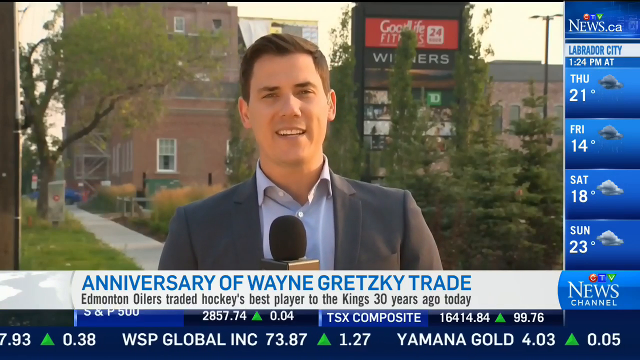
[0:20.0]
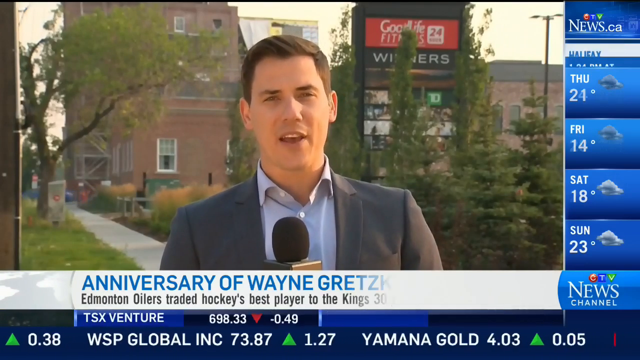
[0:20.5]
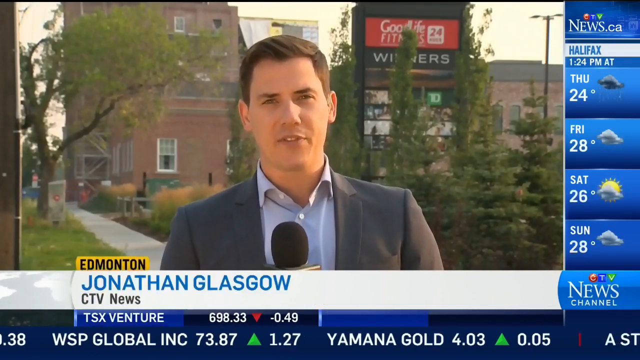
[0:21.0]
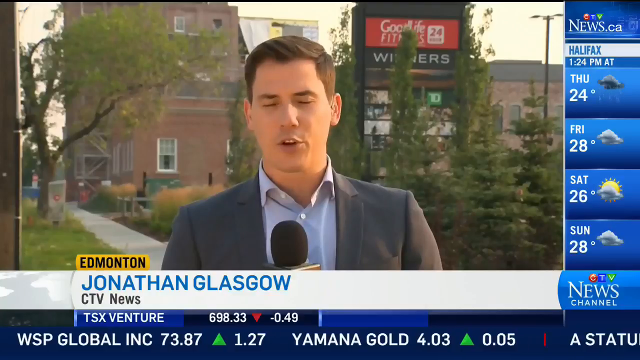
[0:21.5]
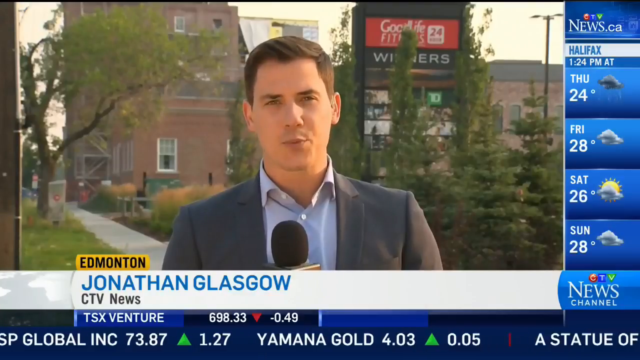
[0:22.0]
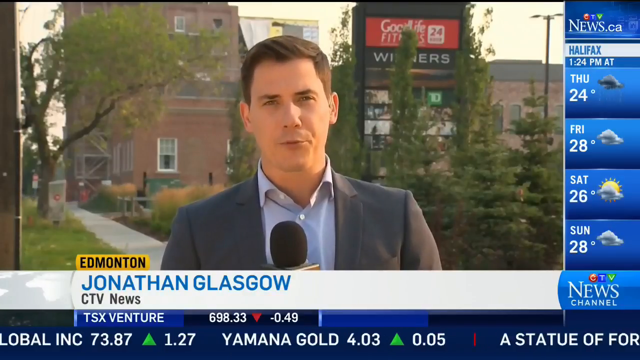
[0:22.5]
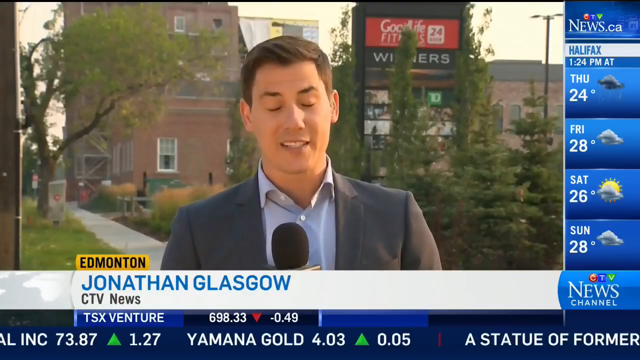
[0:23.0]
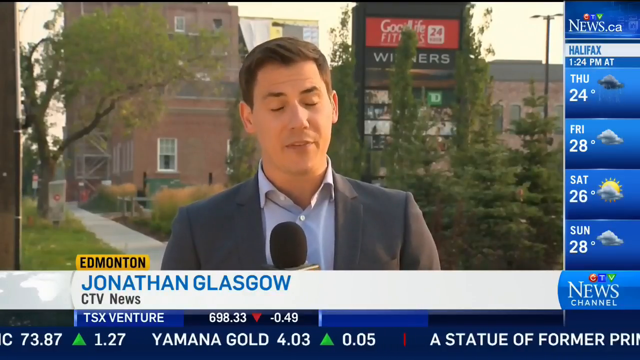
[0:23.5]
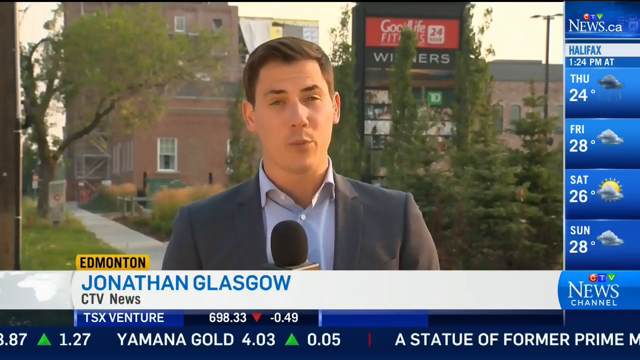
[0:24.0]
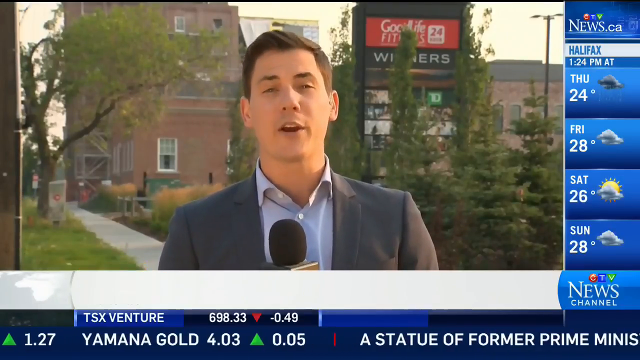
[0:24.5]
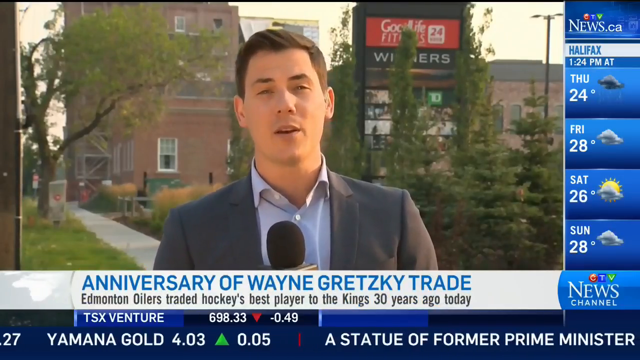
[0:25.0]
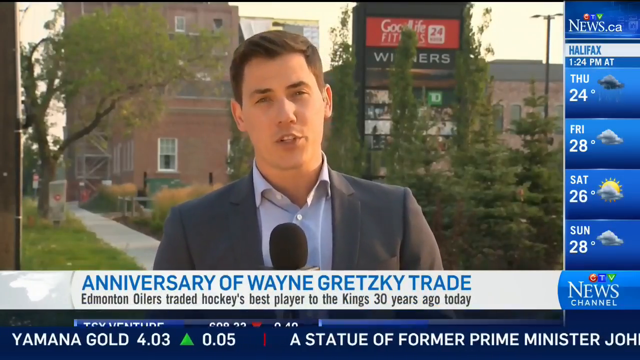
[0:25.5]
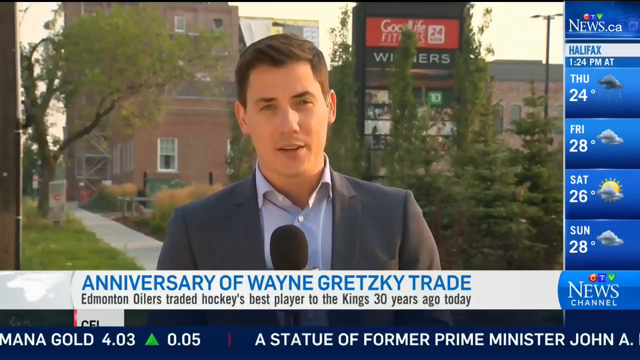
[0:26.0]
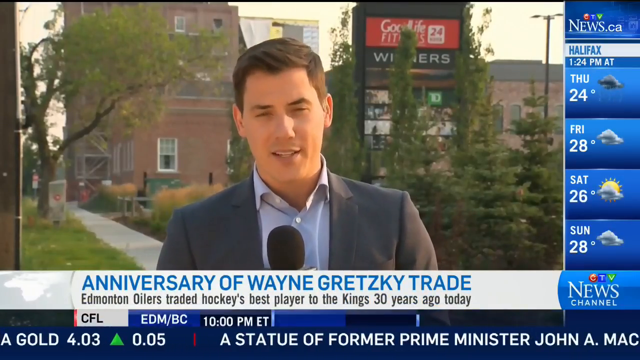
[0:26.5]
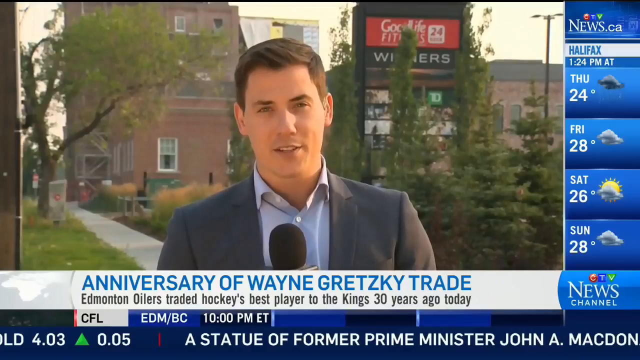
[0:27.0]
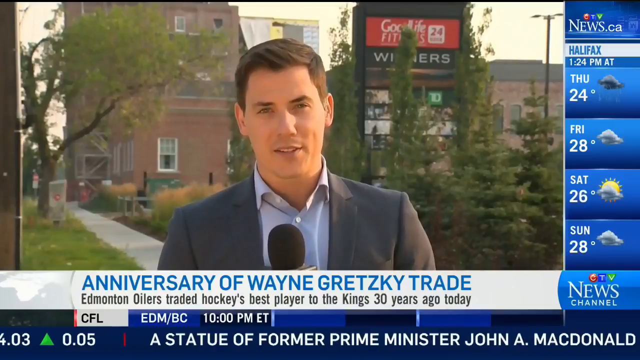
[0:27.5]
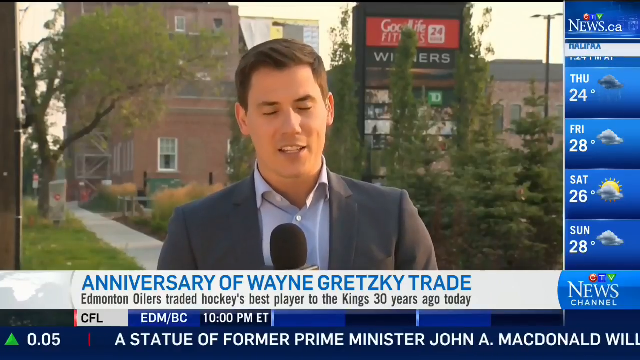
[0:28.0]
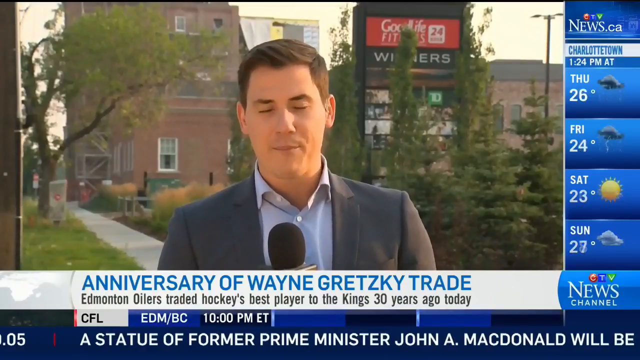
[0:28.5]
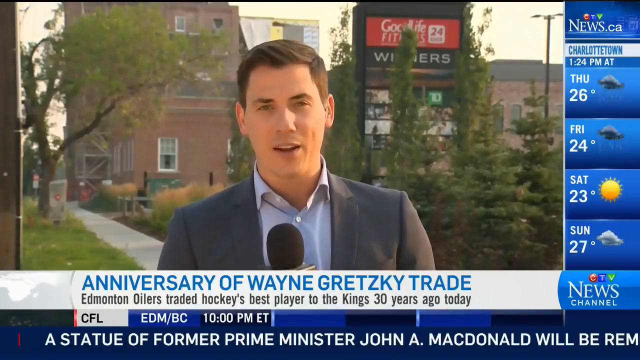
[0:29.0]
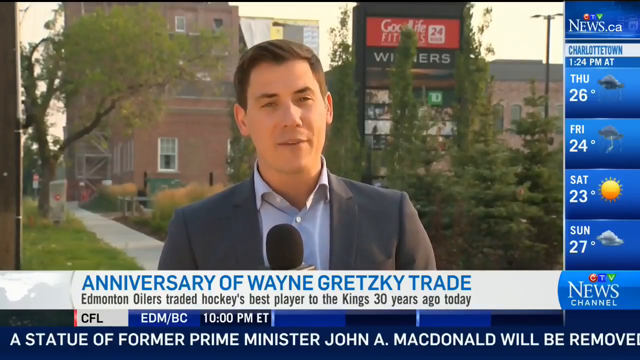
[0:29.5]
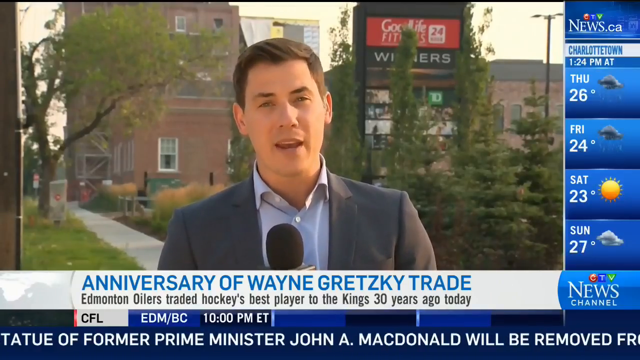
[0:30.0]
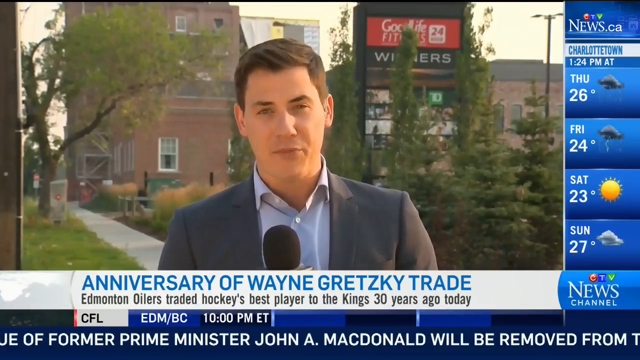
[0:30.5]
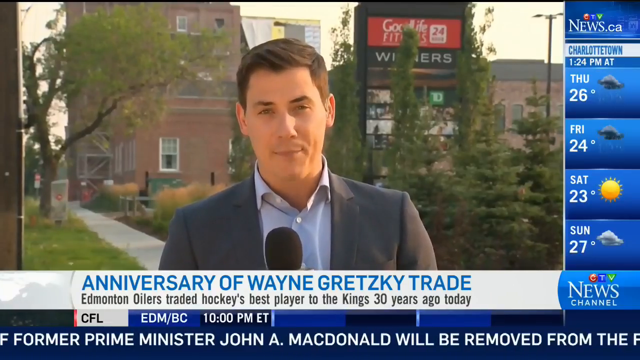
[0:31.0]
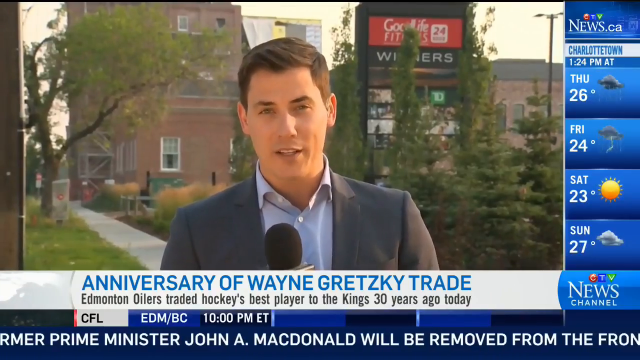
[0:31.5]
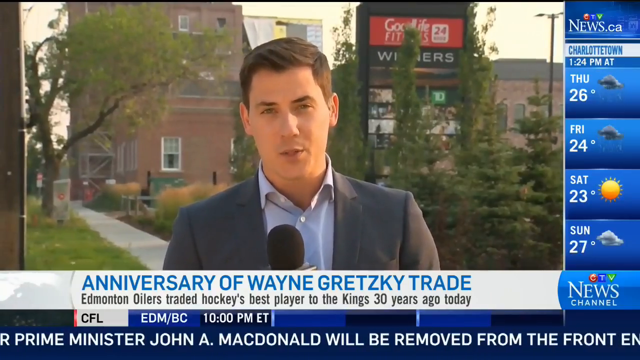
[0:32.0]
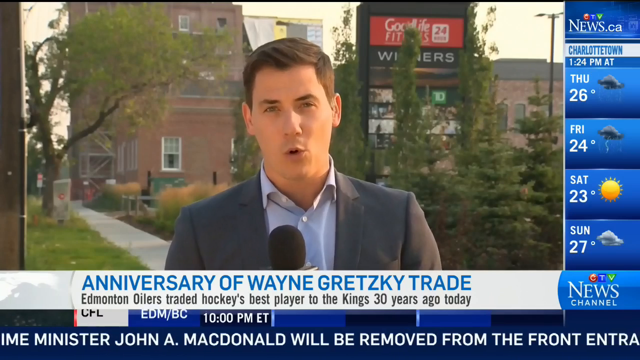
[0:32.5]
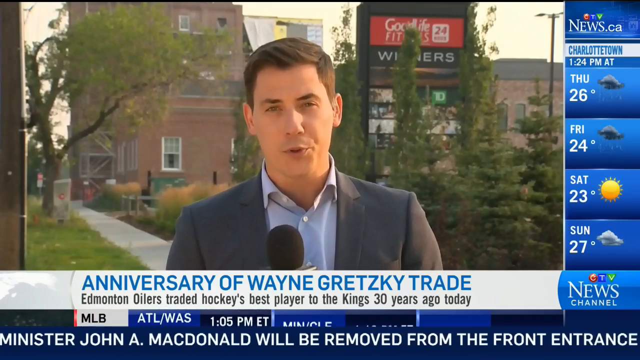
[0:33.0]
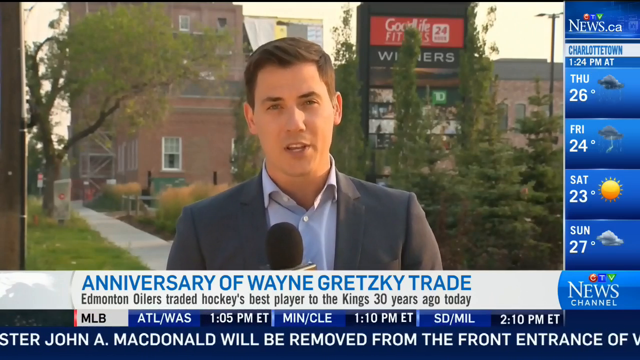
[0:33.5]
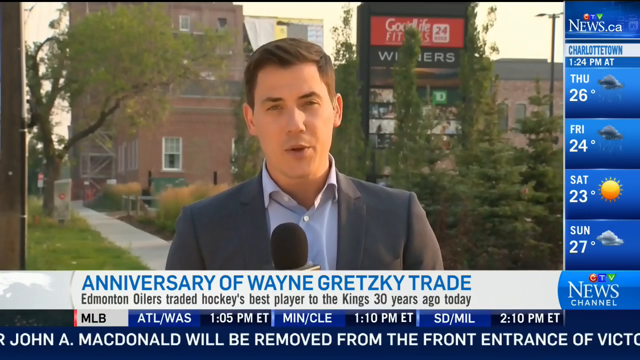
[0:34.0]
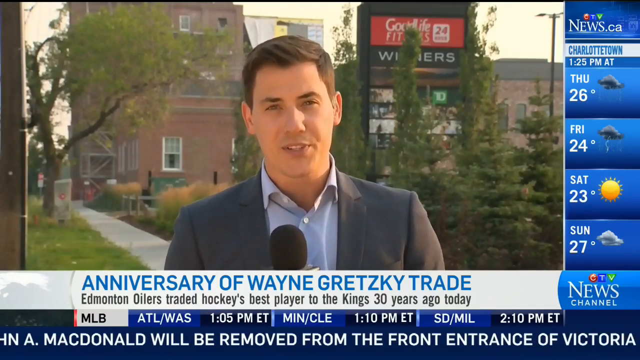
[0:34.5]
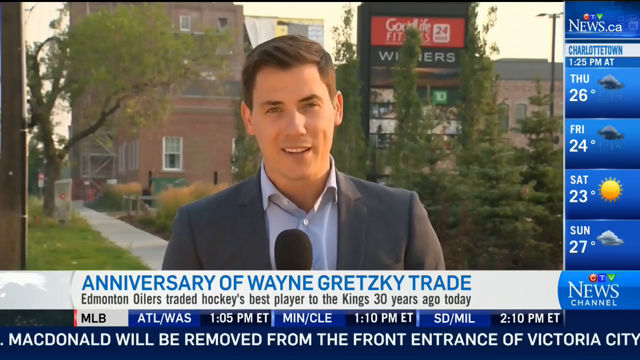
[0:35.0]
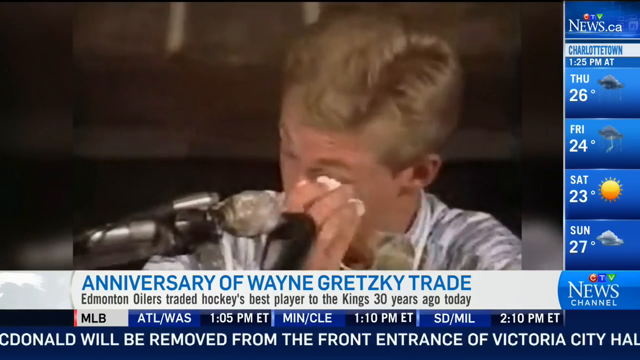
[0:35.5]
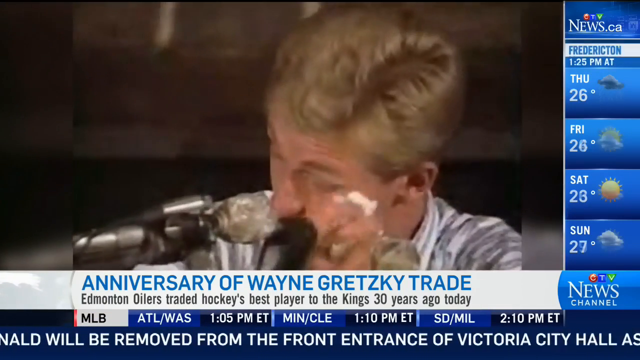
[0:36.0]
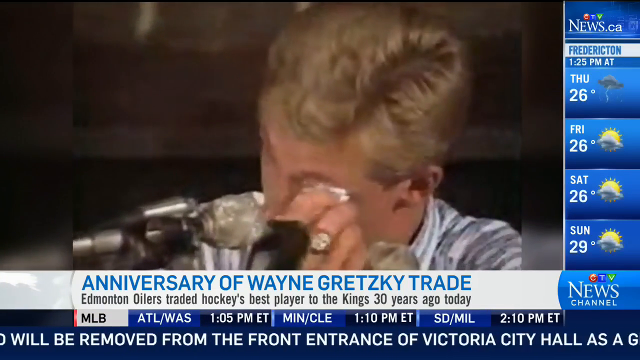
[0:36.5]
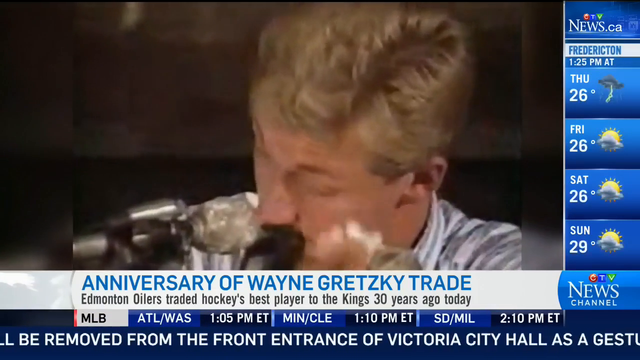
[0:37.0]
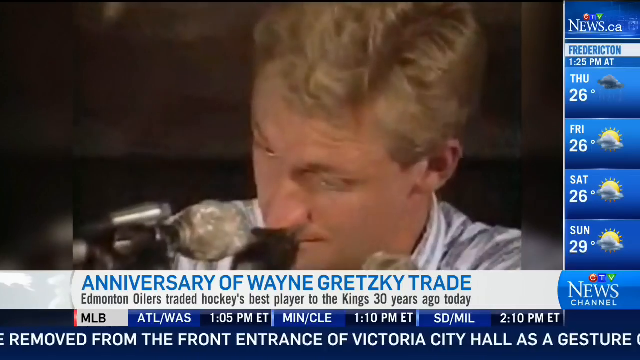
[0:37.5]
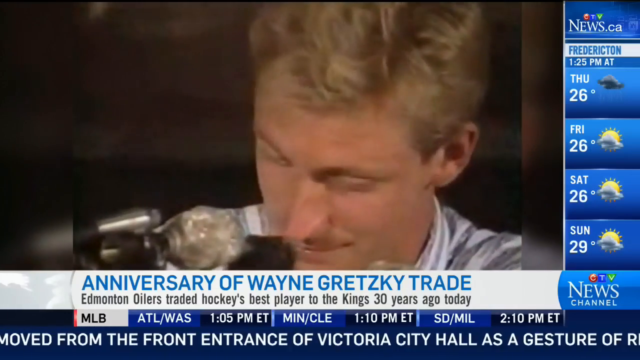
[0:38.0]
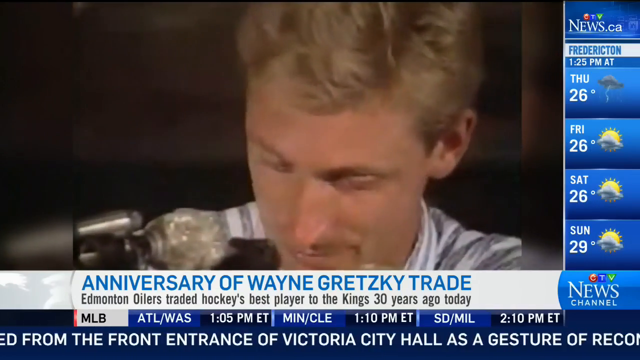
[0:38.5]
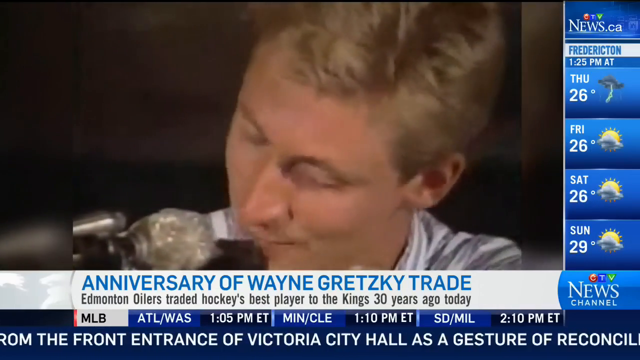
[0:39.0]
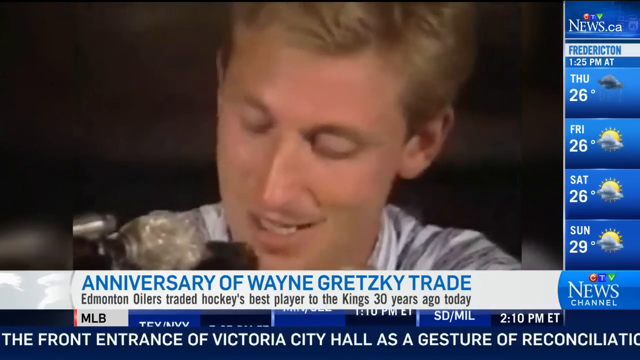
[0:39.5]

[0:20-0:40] The correspondent, apparently in his 30s, smiles a little while holding the mic. He wears a light blue dress shirt. Behind him is a house, almost like an apartment, that goes way up, with a window that looks open. A small green dumpster is in front, and there is a small almost-sidewalk behind. Further down on the left side there is some kind of electrical panel, and a tree branch comes up over the sidewalk. His name is Jonathan Glasco, and he is in Edmonton, Canada. The sky looks hazy and grayish, with no blue sky visible. The Good Life marquee is white with a red background, and a rectangular background to the right says "24 hours". The video then cuts to old footage of a guy crying at a press conference; it is hard to tell at first whether it is Wayne Gretzky or a coach, but it appears to be him. The picture looks very old.